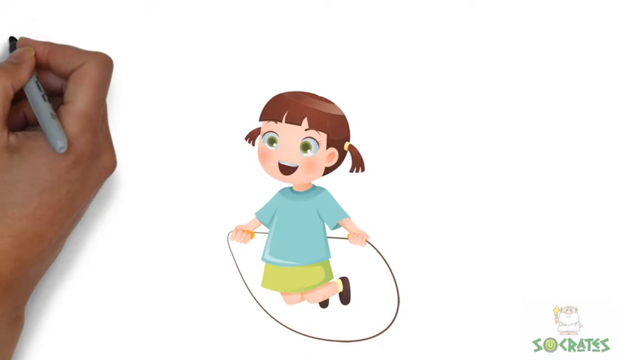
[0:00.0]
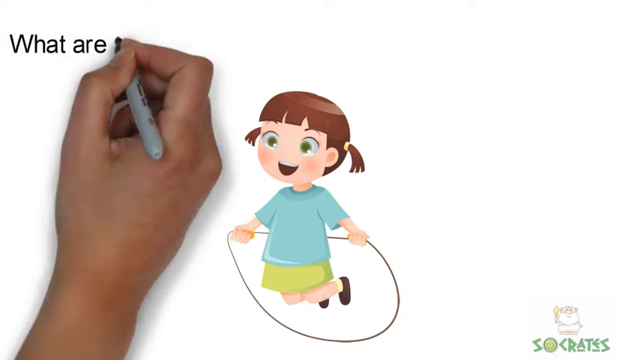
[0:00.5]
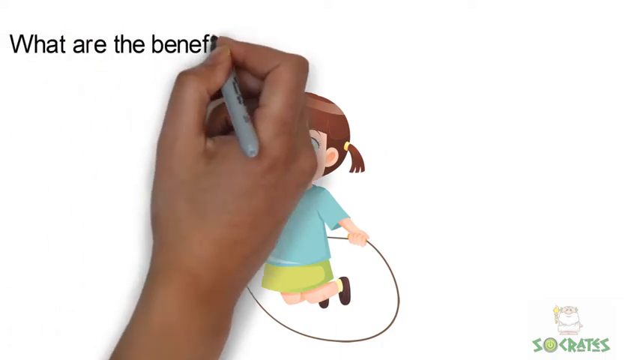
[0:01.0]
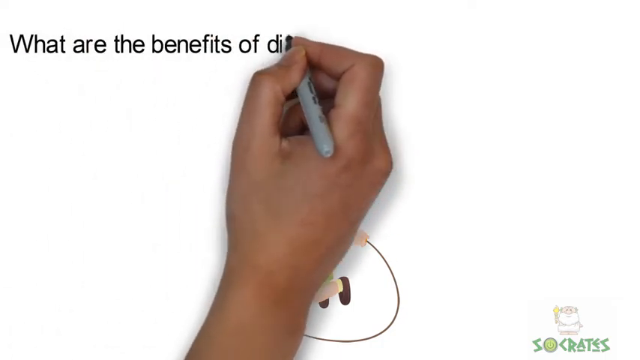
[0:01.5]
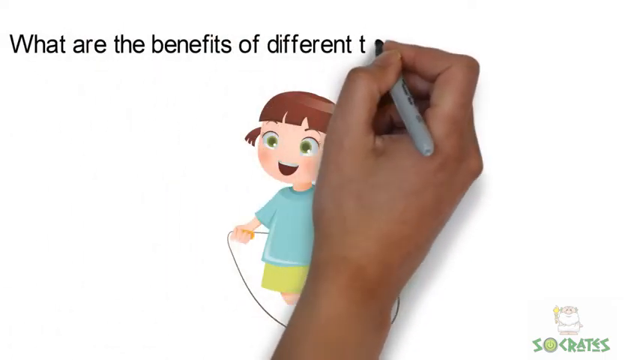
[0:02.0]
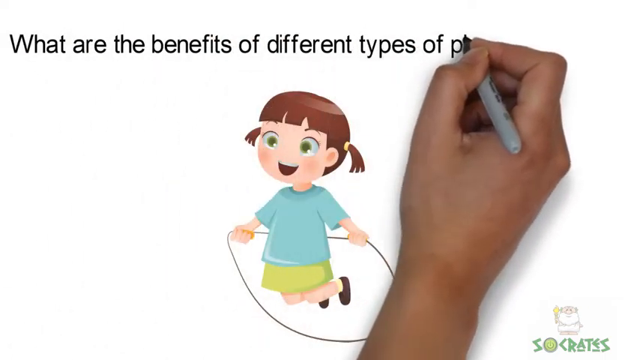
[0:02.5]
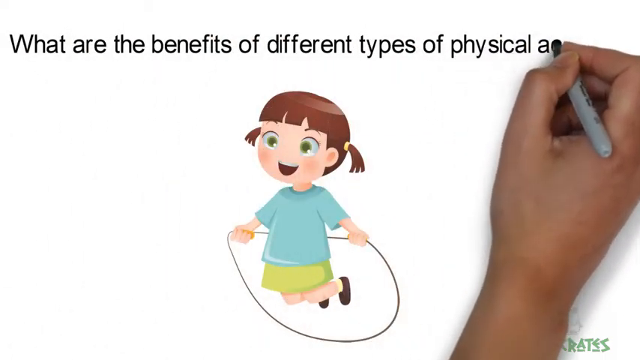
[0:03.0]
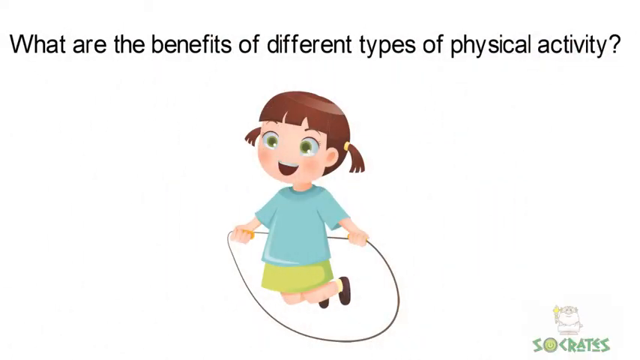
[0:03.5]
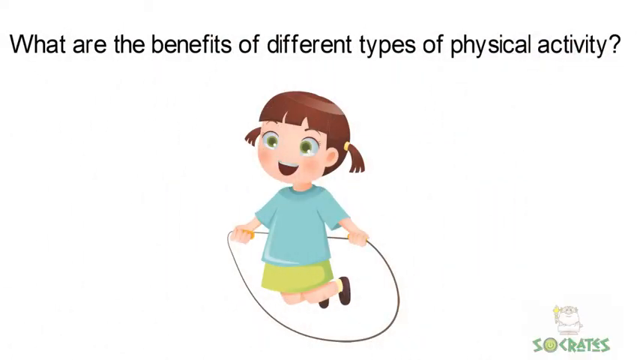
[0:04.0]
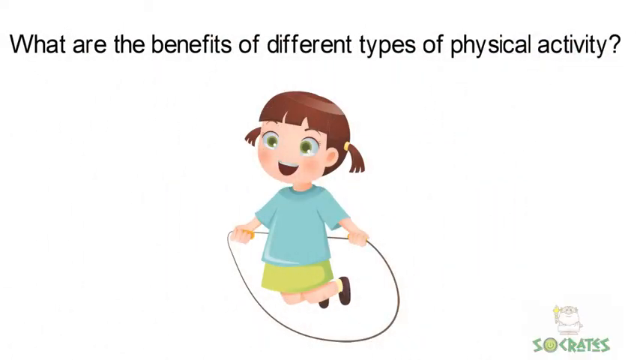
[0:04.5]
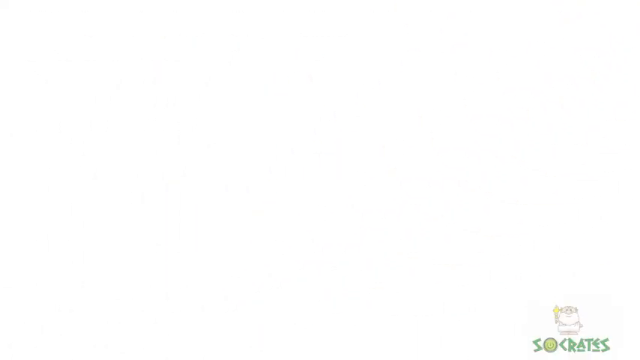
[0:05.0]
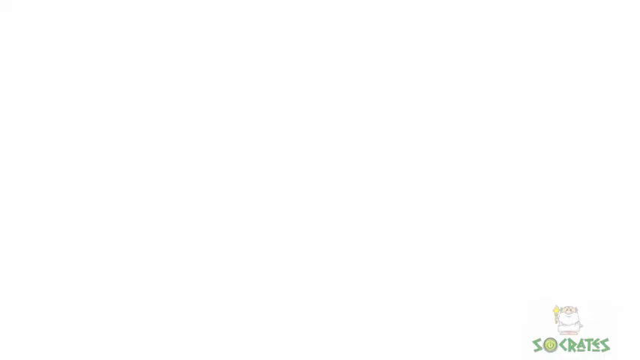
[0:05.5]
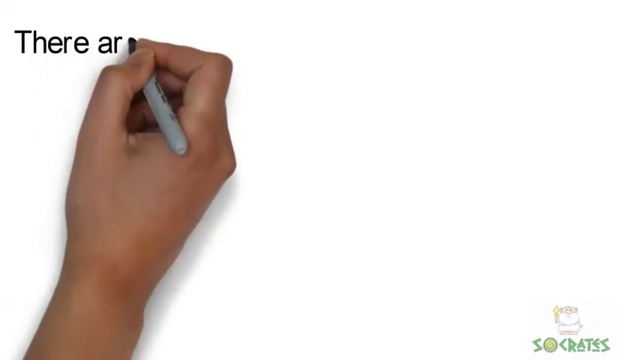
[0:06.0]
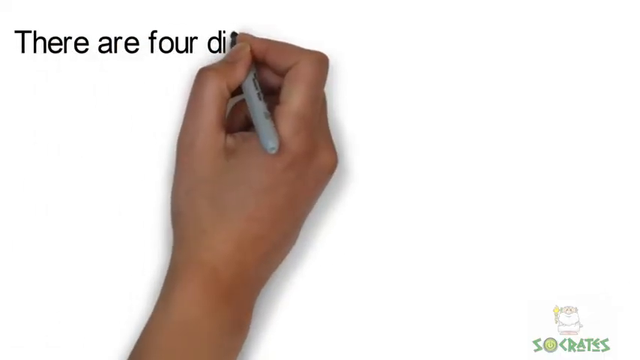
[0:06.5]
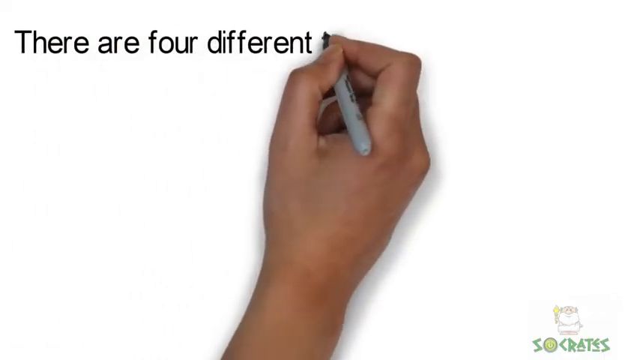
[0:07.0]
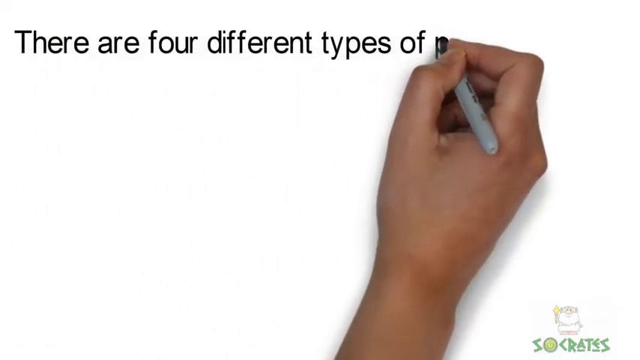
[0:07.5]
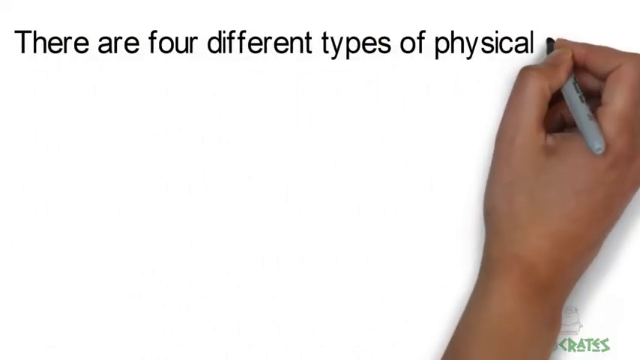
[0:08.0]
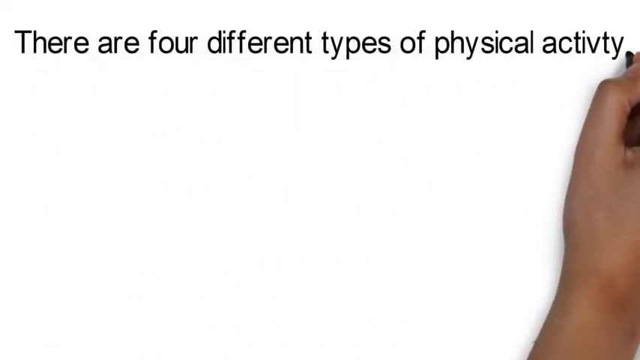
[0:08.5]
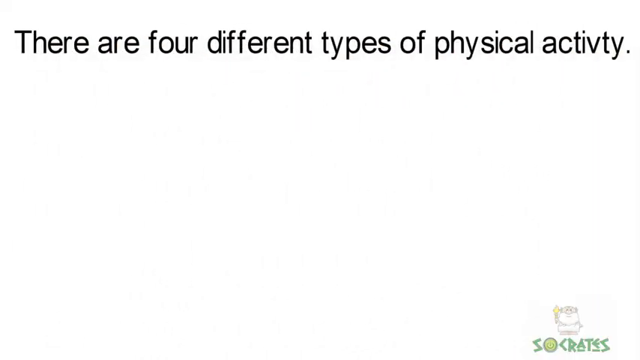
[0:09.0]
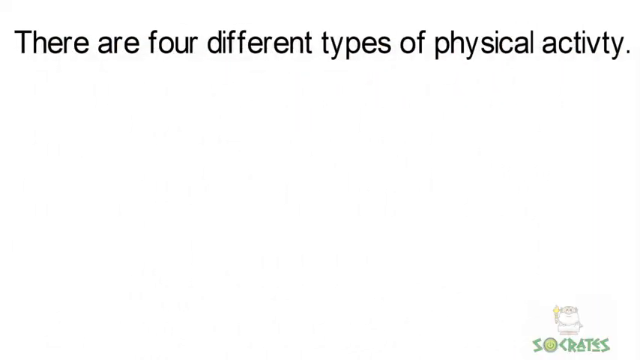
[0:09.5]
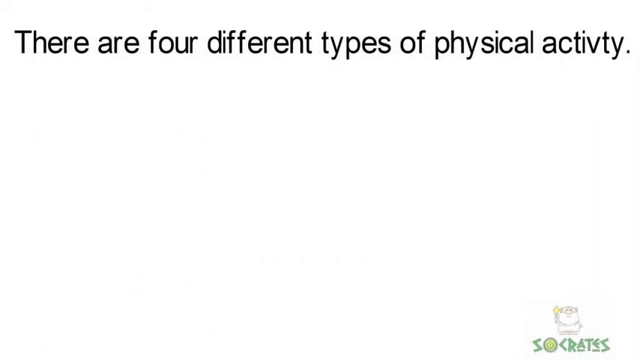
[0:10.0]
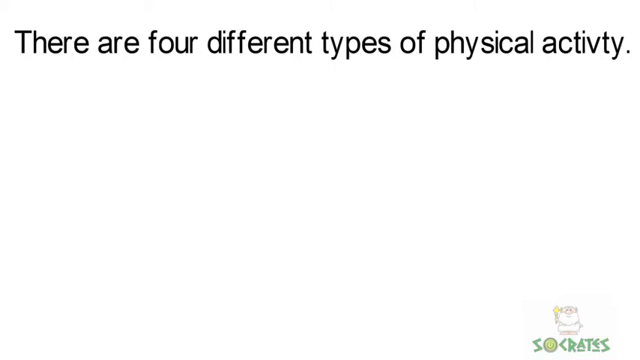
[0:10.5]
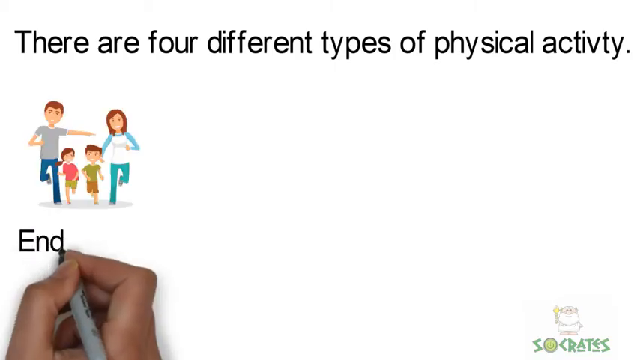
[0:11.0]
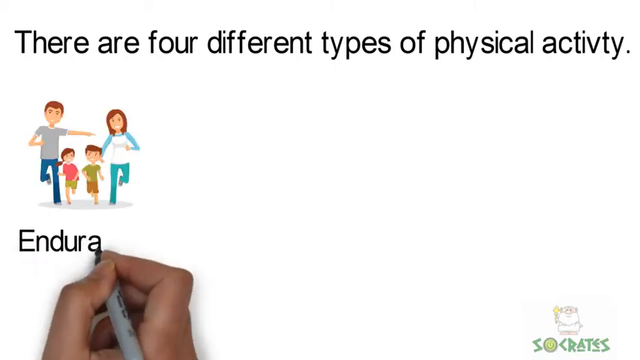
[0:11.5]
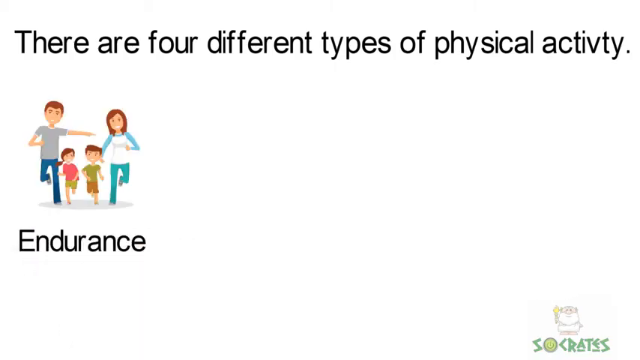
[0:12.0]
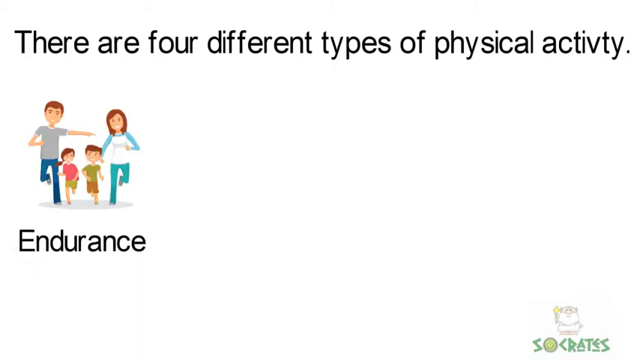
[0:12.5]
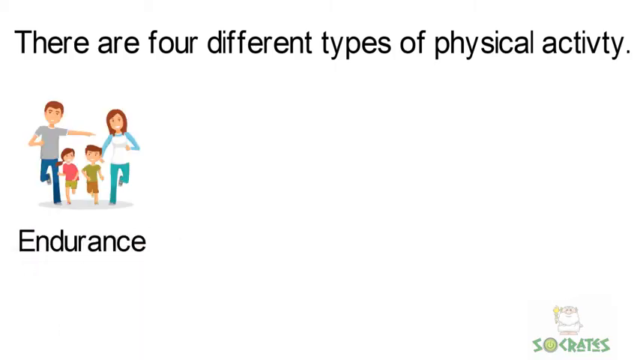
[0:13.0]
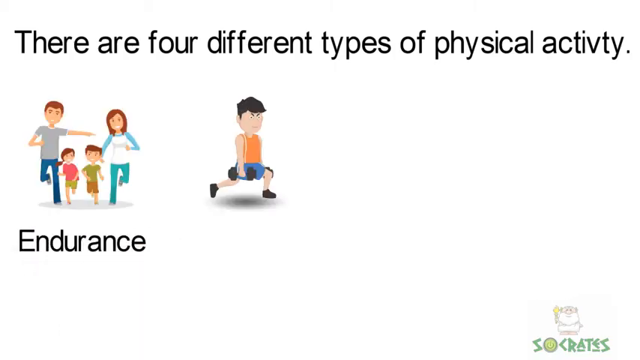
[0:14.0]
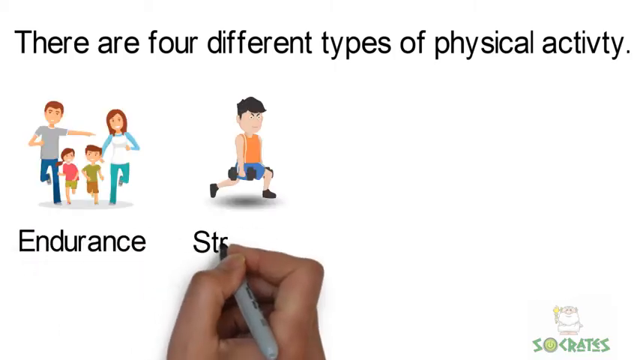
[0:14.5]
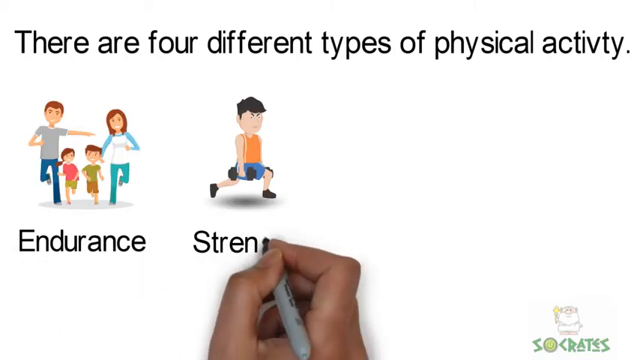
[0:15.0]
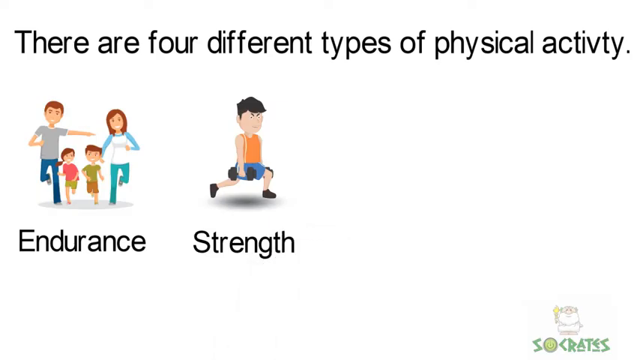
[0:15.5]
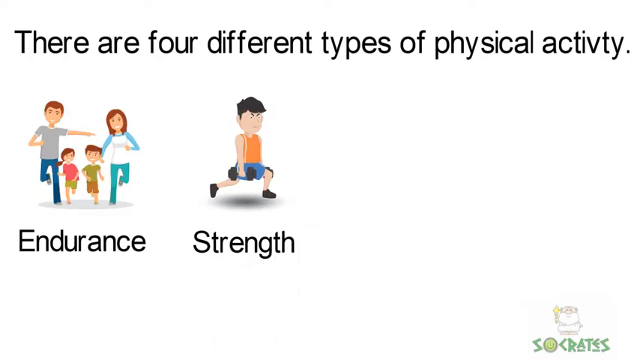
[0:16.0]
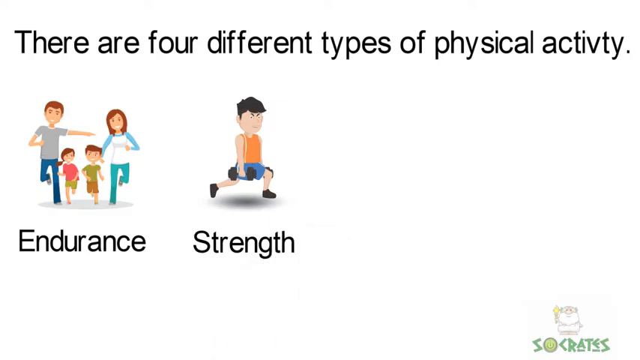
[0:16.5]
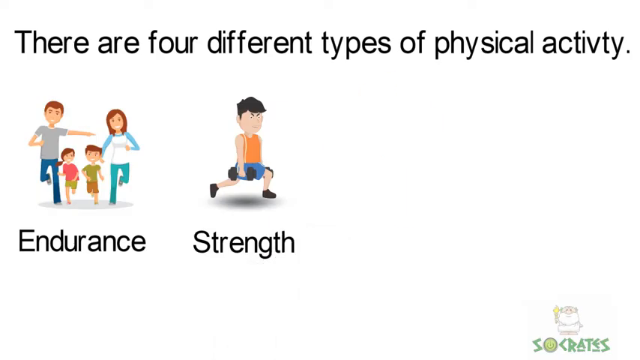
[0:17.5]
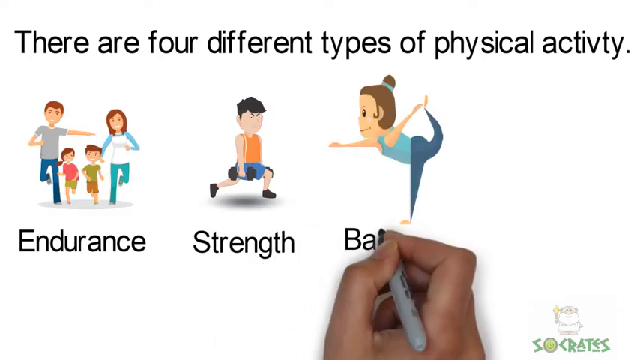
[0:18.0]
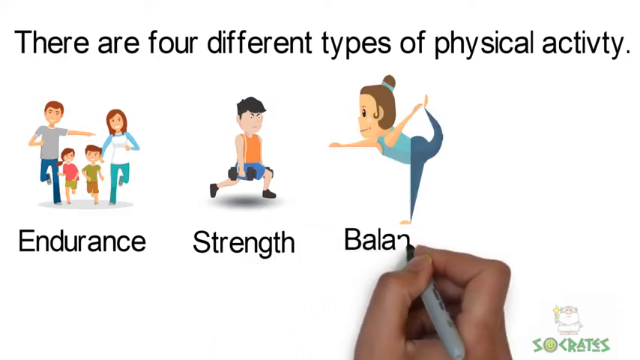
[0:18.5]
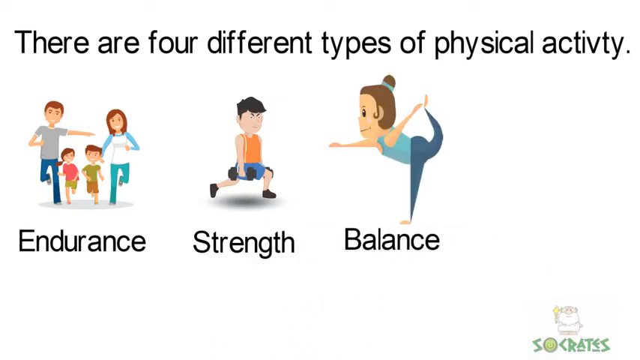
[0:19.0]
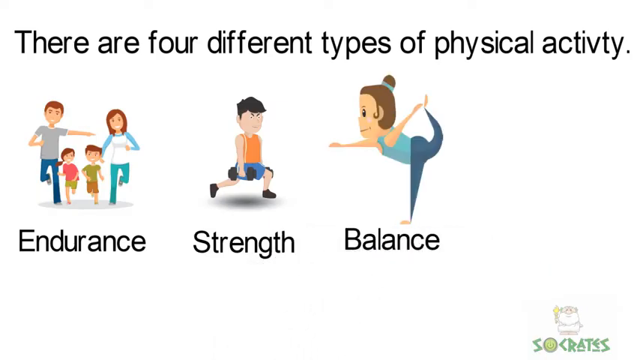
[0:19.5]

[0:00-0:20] The screen is white, and in the middle is a cartoon little girl with brown hair in two pigtails, one on each side of her head. She wears a light blue shirt and a lime green dress. She is up in the air with her knees bent, holding a jump rope and jumping through it. A hand holding a gray and black Sharpie marker appears and writes above her: "What are the benefits of different types of physical activity?" That goes away, and the hand writes "There are four different types of physical activity." The hand then writes "endurance," and a cartoon family appears: a man and a woman with two little kids between them, facing the camera. Next the word "strength" is written, and above it a boy with black hair, wearing an orange tank top and blue shorts, is squatting down with barbells in his hands. Then the word "balance" is written, and above it a cartoon woman appears leaning forward with one foot on the ground and the other bent behind her; she holds it with her left hand while reaching out in front of her with her right hand. She wears a green tank top and dark green stretch pants, and her hair is up in a ponytail.